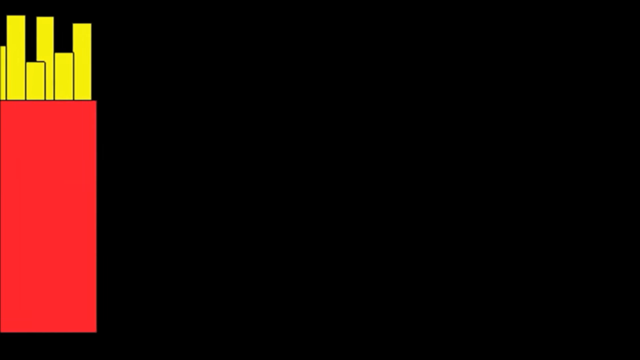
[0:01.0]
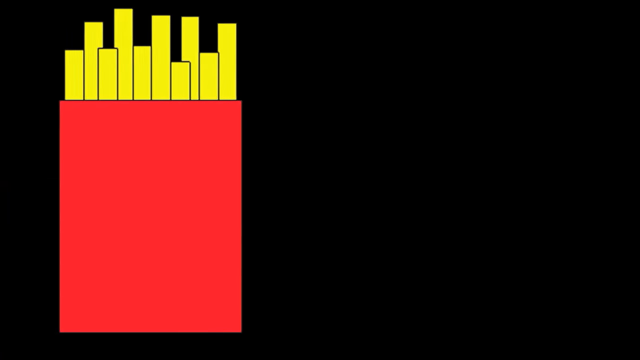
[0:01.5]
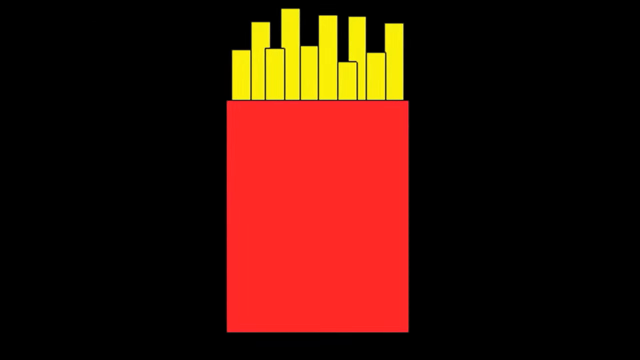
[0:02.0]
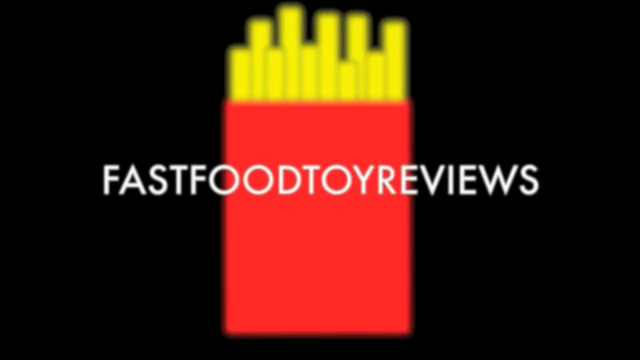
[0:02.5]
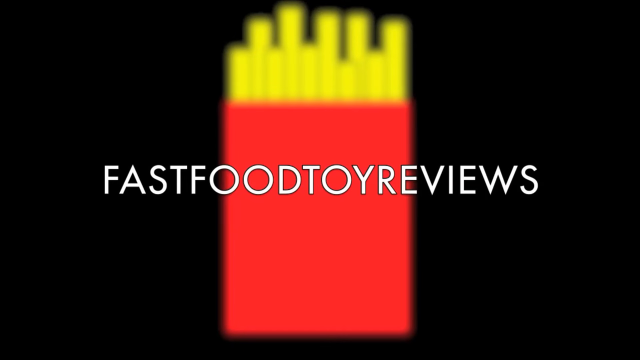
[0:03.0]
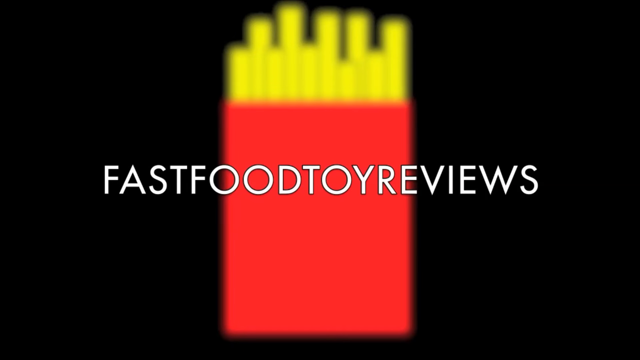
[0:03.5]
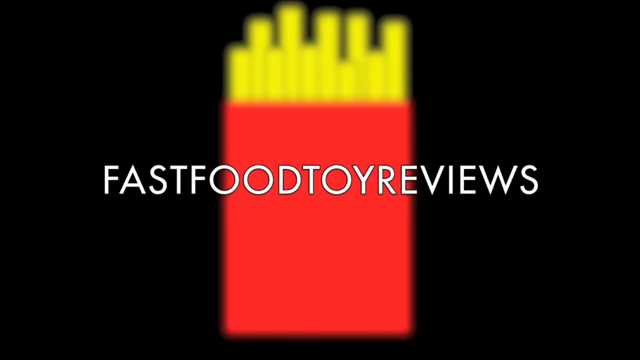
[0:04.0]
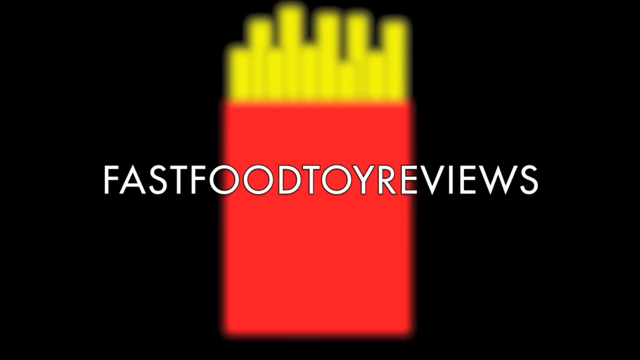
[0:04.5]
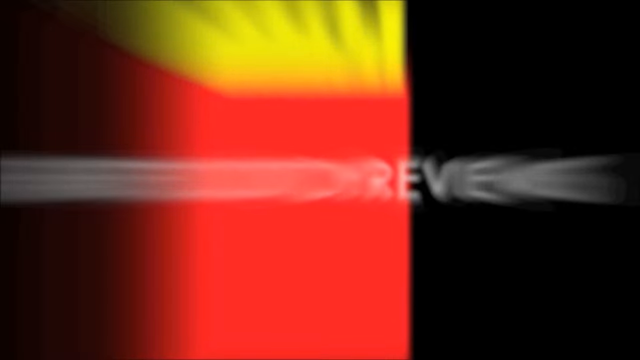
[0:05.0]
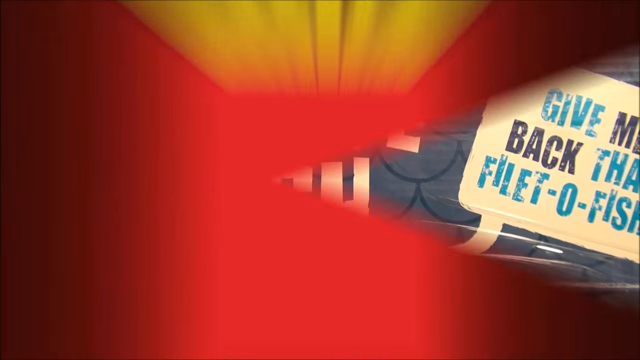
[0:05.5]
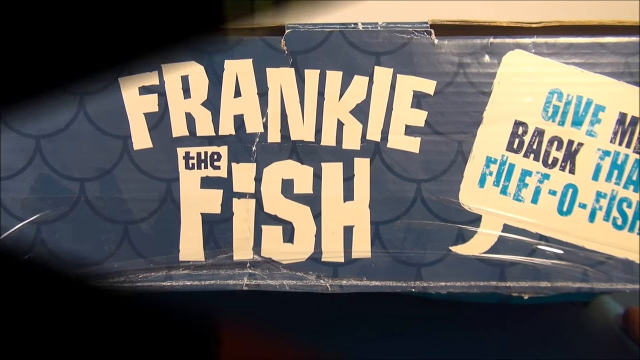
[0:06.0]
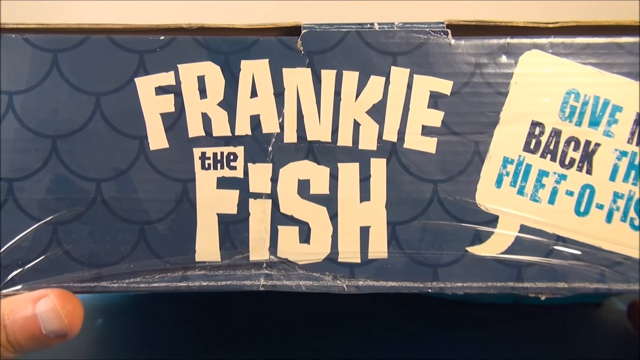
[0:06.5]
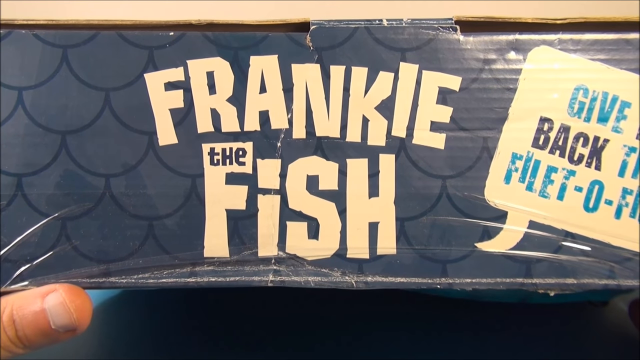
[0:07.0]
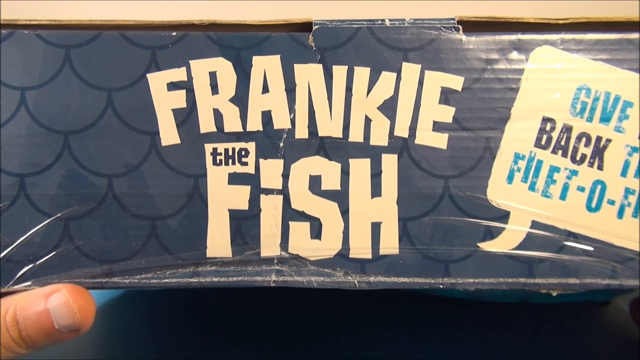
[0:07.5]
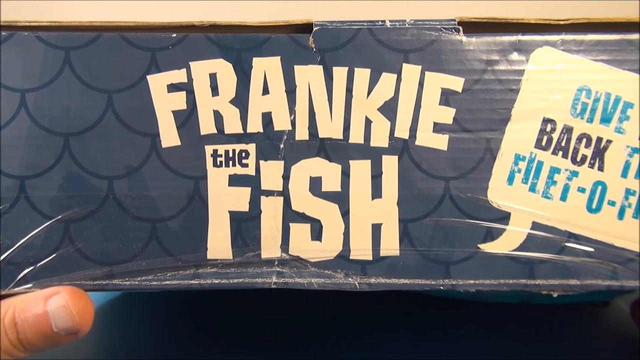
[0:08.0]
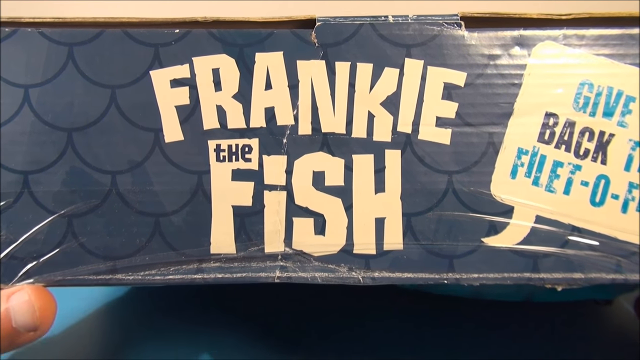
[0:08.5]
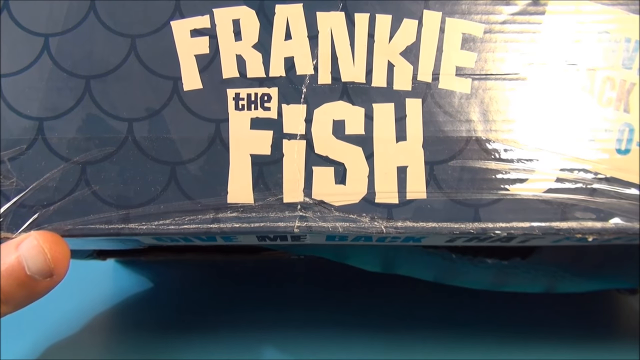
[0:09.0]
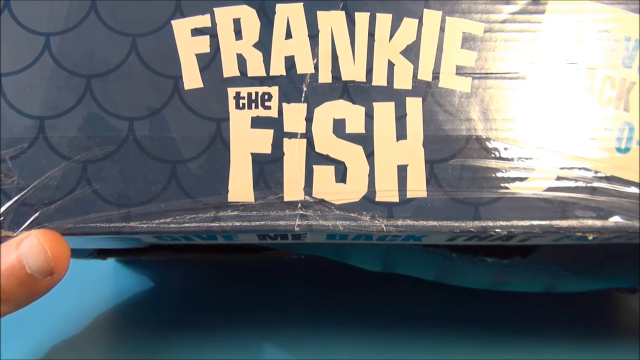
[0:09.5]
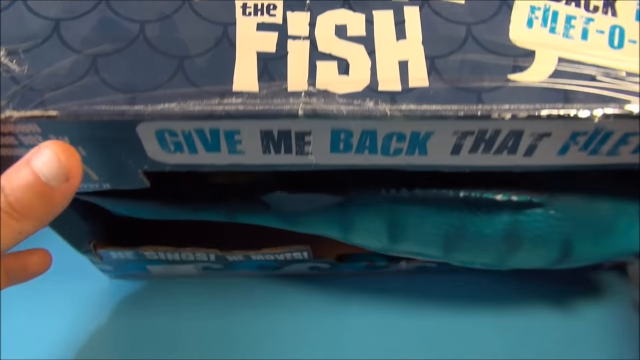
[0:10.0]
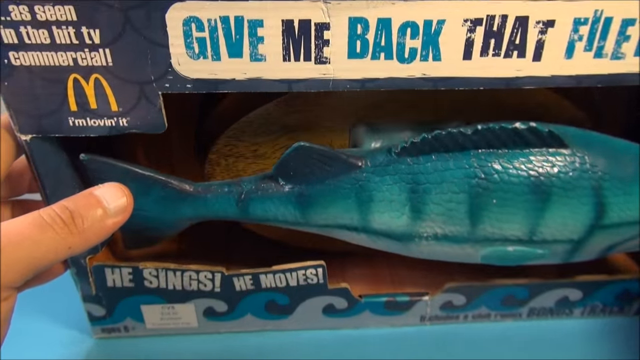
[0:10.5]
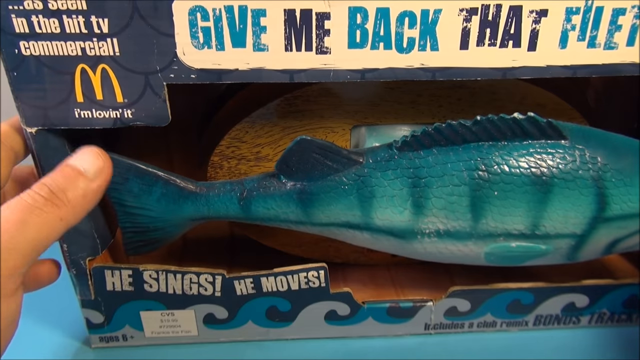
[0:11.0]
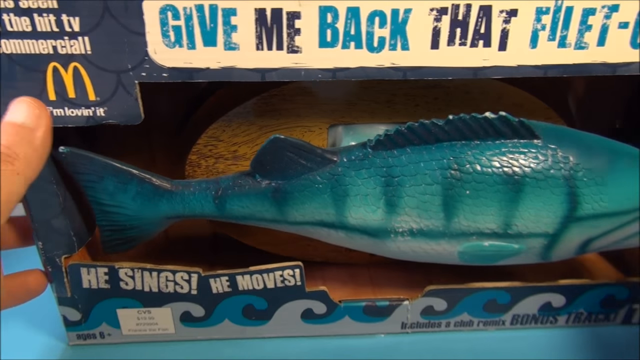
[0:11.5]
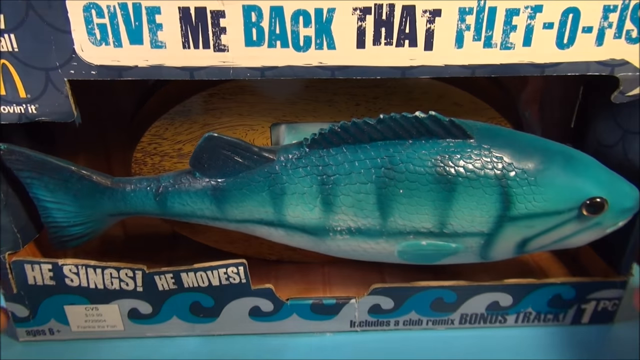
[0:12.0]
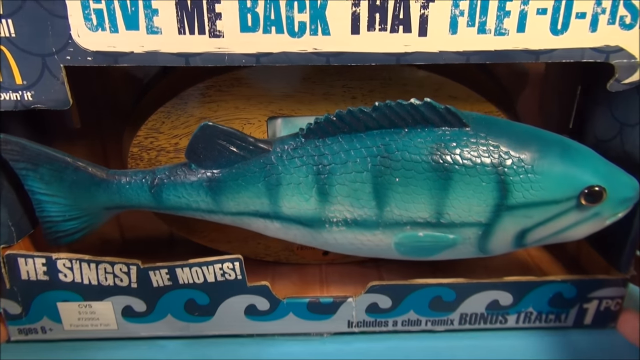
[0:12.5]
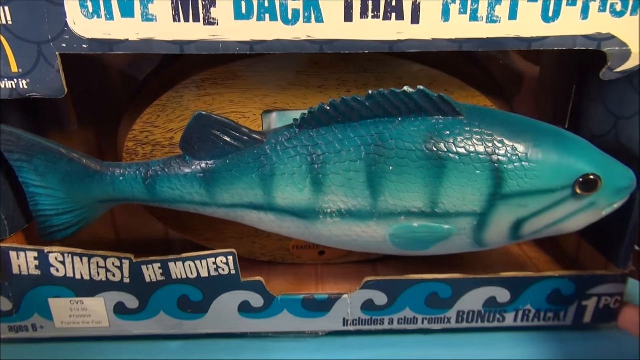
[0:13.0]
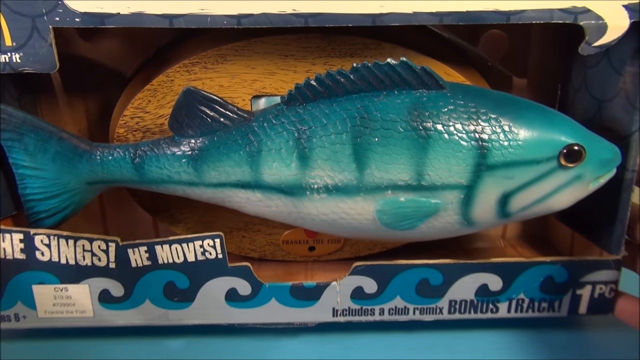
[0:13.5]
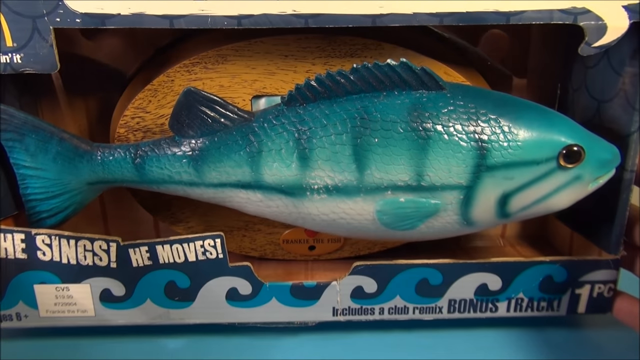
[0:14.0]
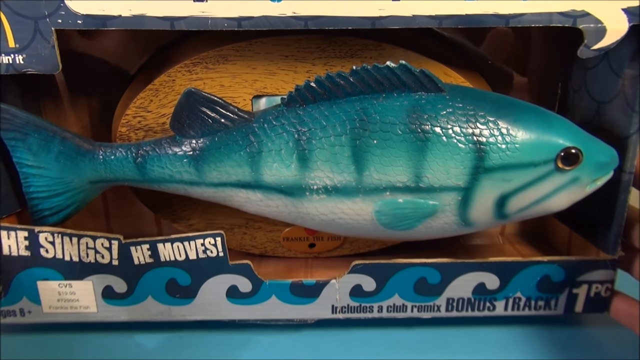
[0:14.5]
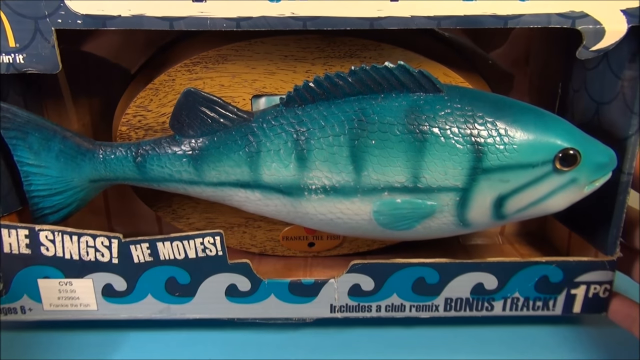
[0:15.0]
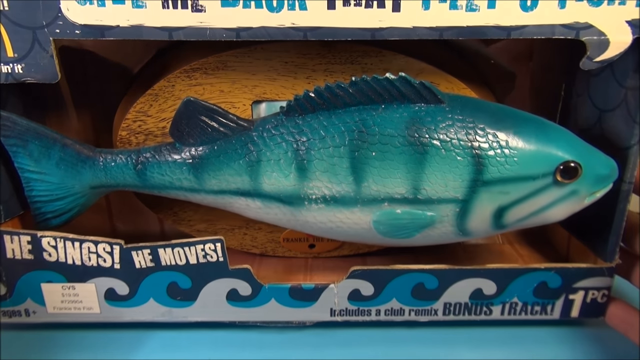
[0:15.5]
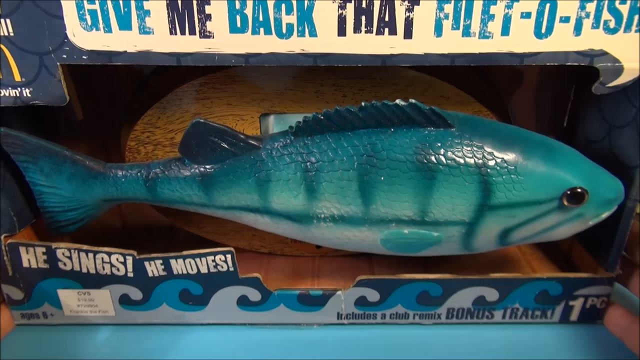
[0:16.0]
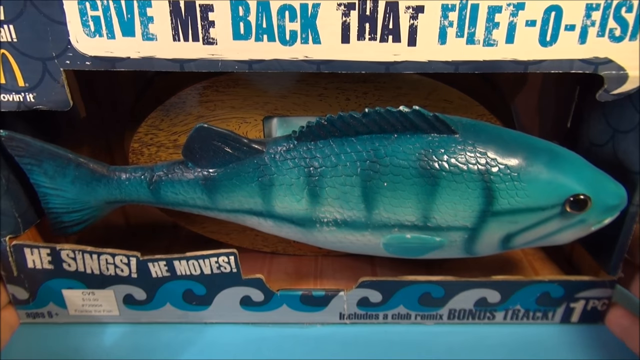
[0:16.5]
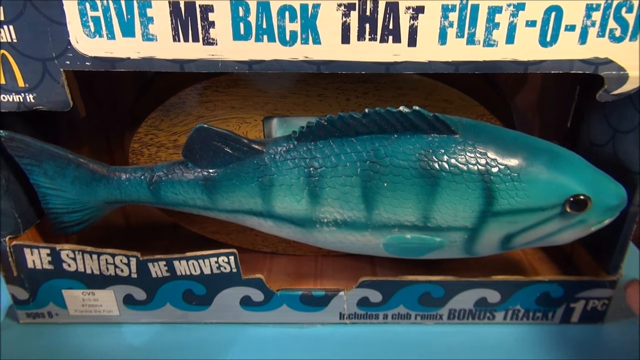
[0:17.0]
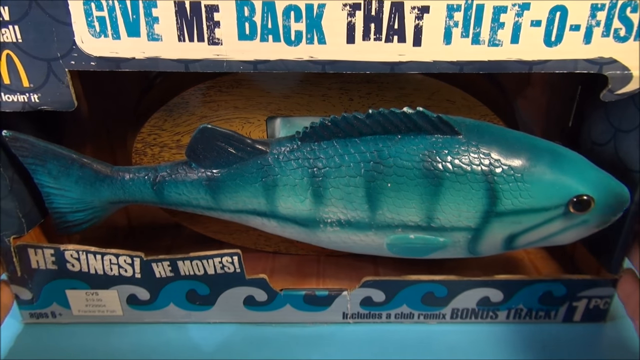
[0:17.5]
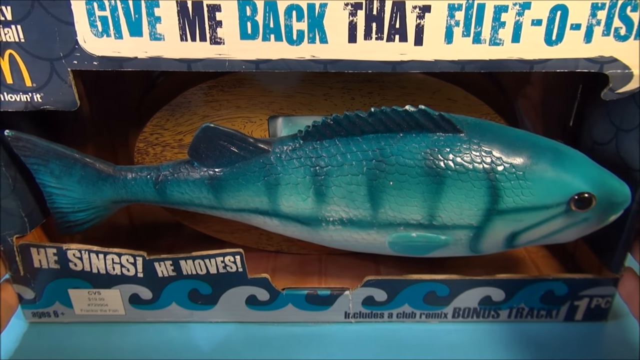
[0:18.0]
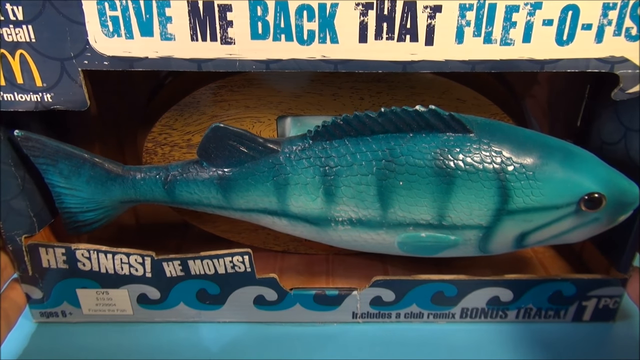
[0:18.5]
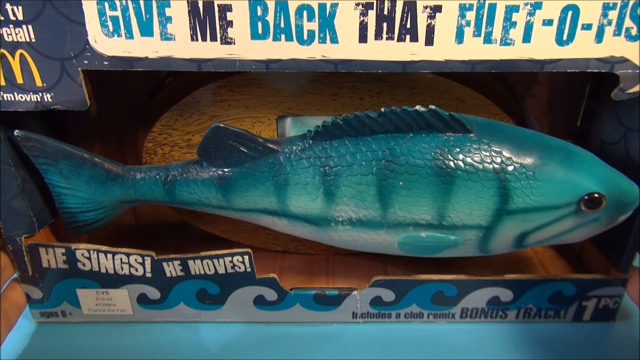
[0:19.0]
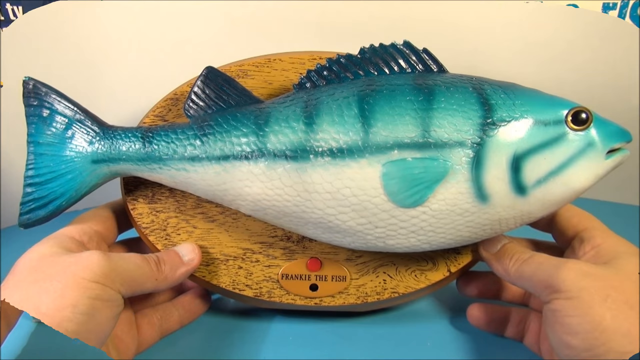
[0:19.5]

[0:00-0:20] The video's title reads "2009 McDonald's Frankie the Singing Fish," followed by more words that are not visible. Against a black screen, a cartoonish version of the red McDonald's fry container with yellow french fries sticking up moves across the screen, and the website's name, "Fast Food Toy Reviews," is overlaid on top of it and becomes slightly bolded. A box with Frankie the Fish on top appears; the box is gray and designed to look like fish scales, with "Frankie the Fish" written in large letters of a pale yellow or deep ivory color. A person holds the box, tipping it slightly, then tips it upright. Across the top of the box it says "give me back that Filet-O-Fish," and a plastic fish is visible inside. The fish is a somewhat teal blue color with different shading, showing scales, an eye, the tail, fins off to the side and on top, and a little white for the belly. At the bottom of the box there is a wave design and the words "he sings, he moves" with exclamation points.